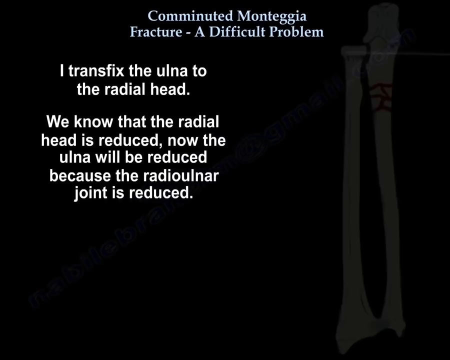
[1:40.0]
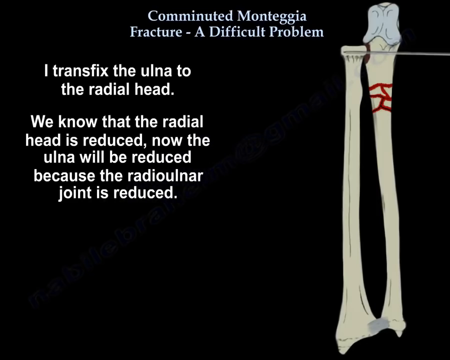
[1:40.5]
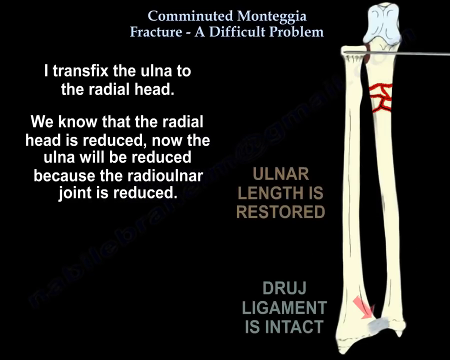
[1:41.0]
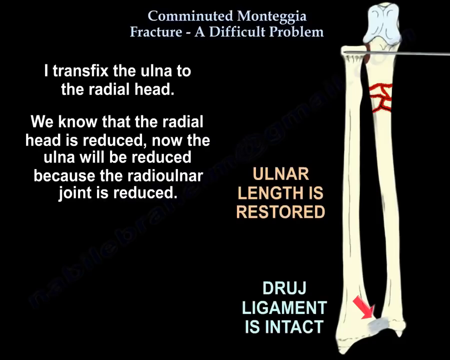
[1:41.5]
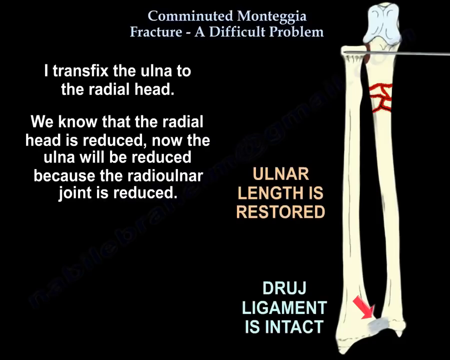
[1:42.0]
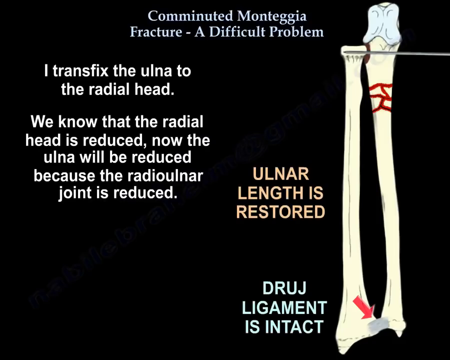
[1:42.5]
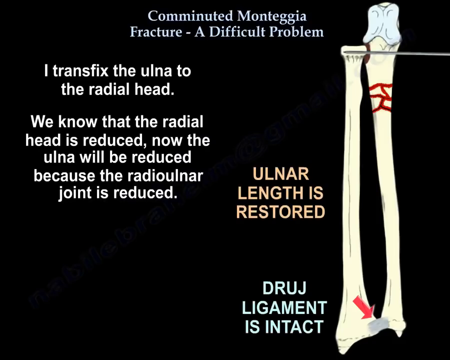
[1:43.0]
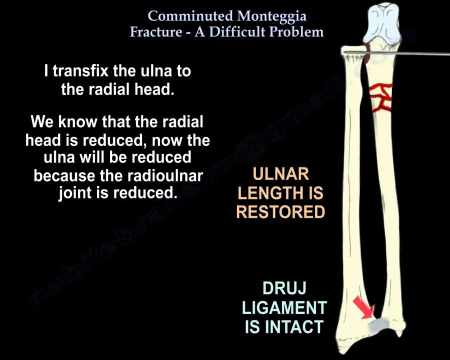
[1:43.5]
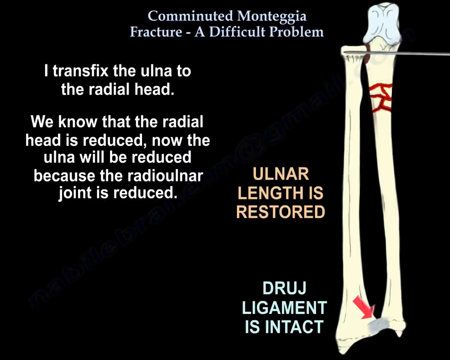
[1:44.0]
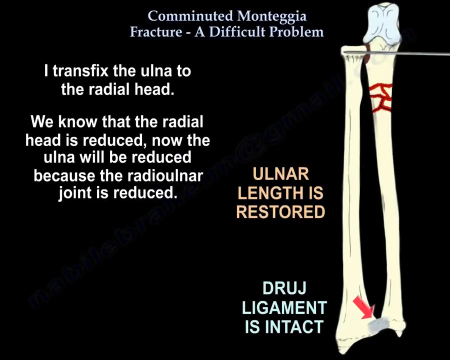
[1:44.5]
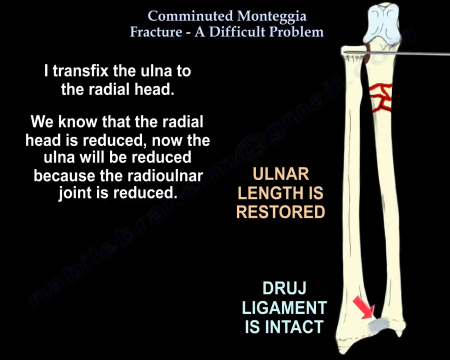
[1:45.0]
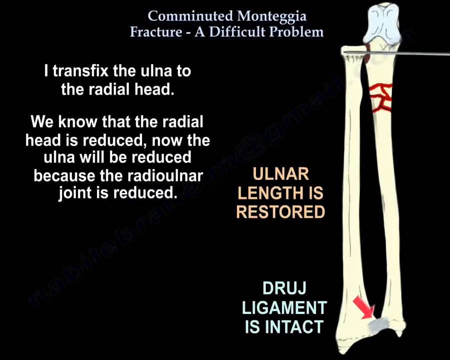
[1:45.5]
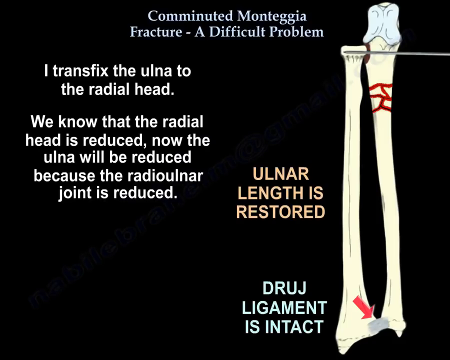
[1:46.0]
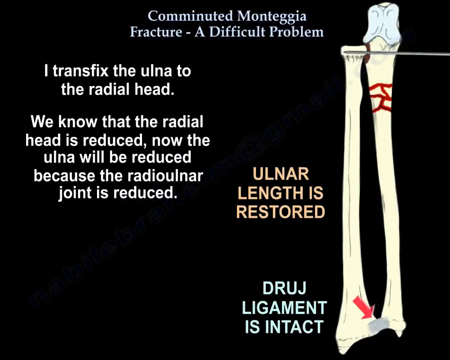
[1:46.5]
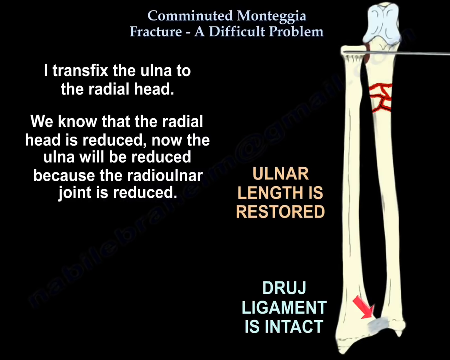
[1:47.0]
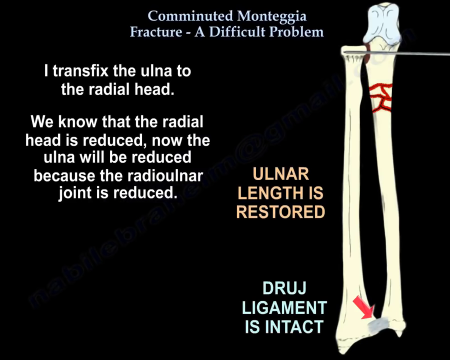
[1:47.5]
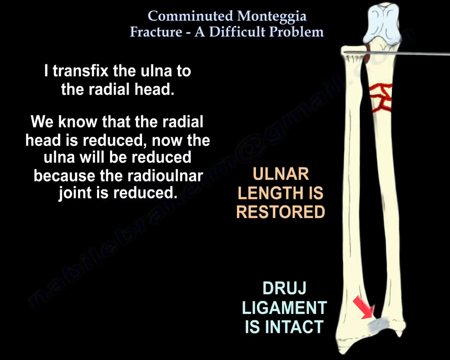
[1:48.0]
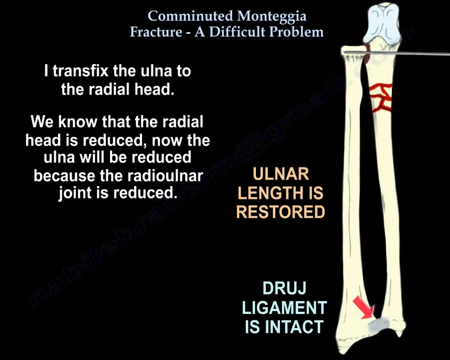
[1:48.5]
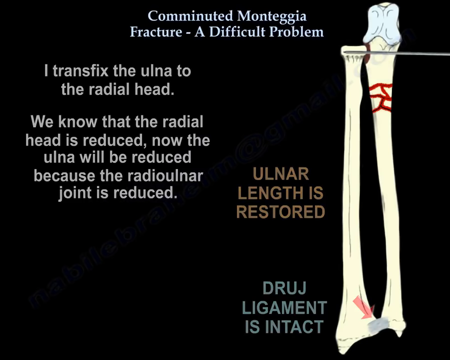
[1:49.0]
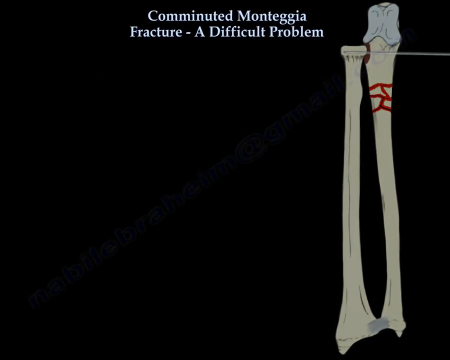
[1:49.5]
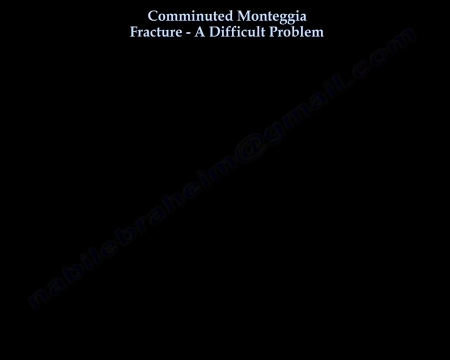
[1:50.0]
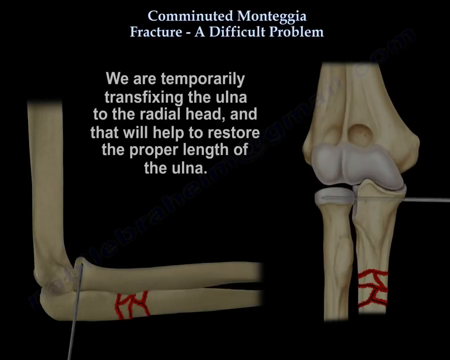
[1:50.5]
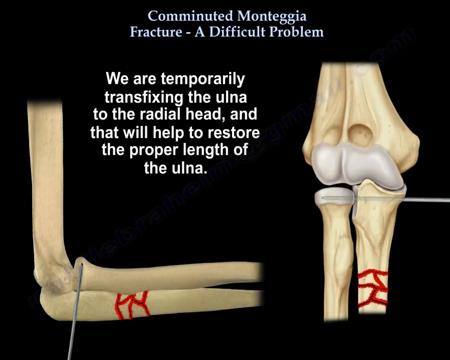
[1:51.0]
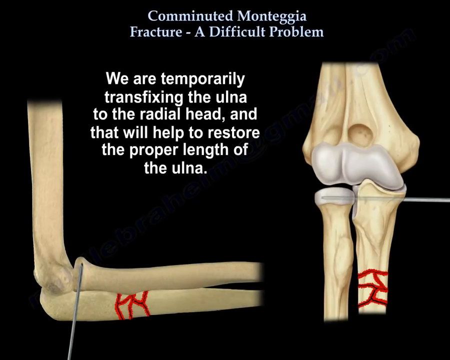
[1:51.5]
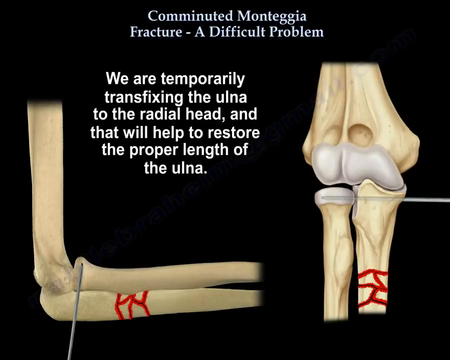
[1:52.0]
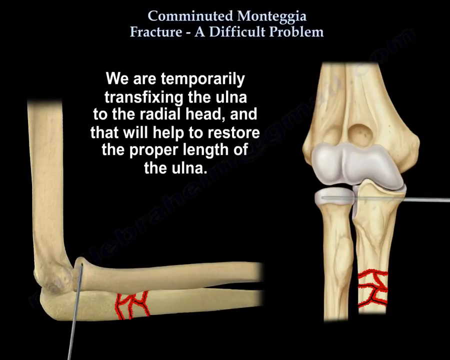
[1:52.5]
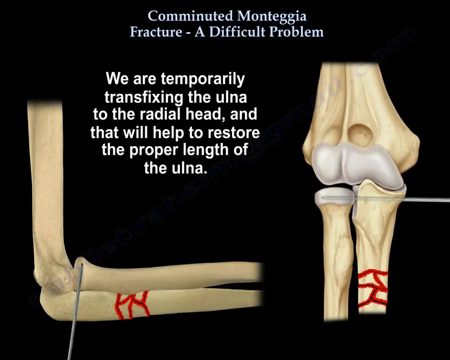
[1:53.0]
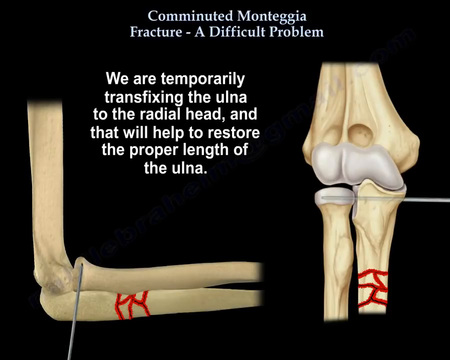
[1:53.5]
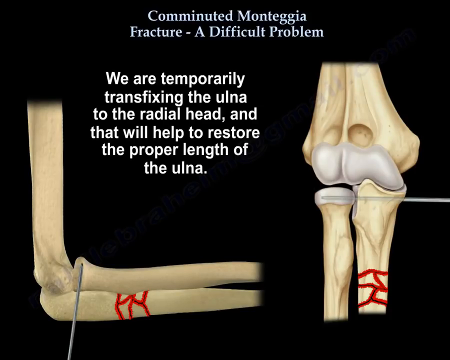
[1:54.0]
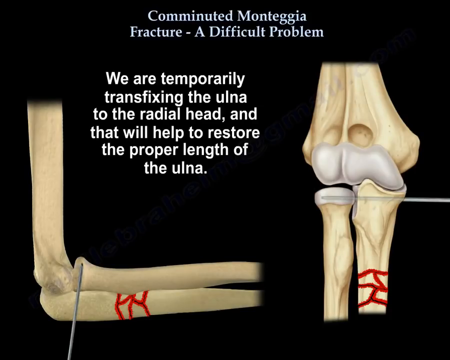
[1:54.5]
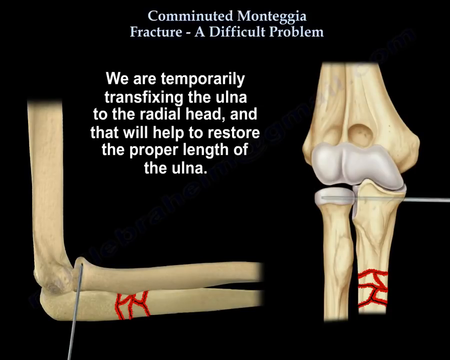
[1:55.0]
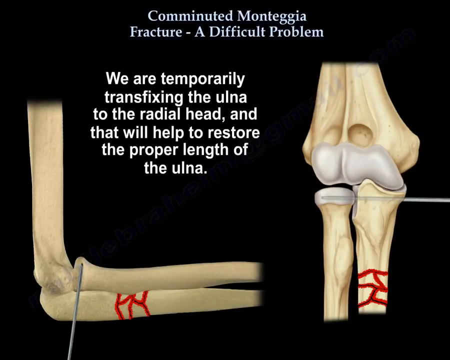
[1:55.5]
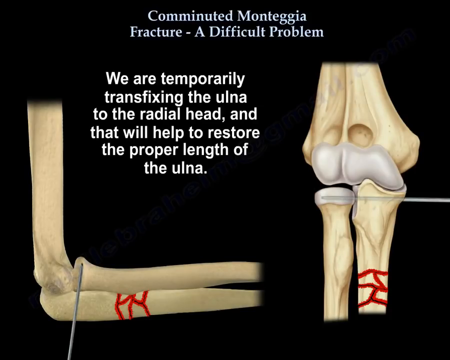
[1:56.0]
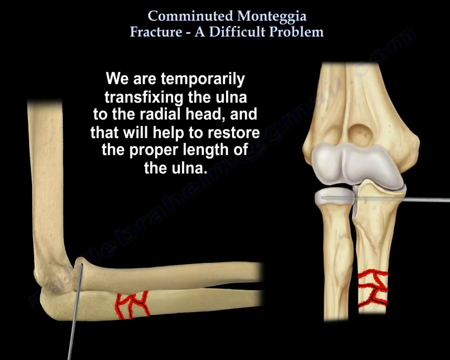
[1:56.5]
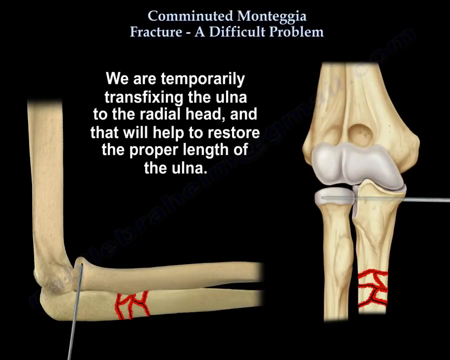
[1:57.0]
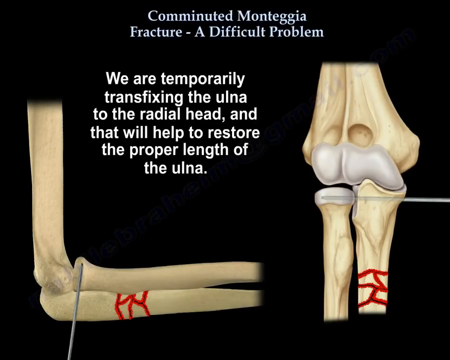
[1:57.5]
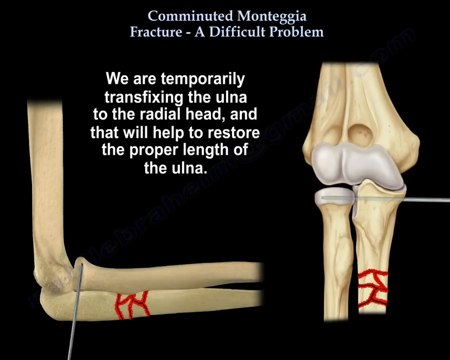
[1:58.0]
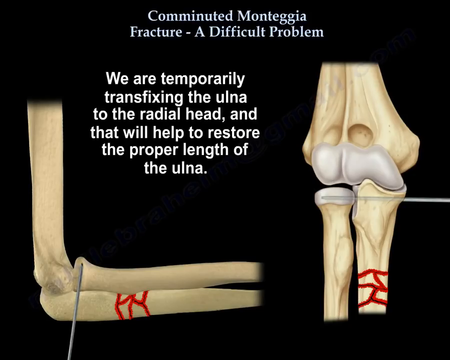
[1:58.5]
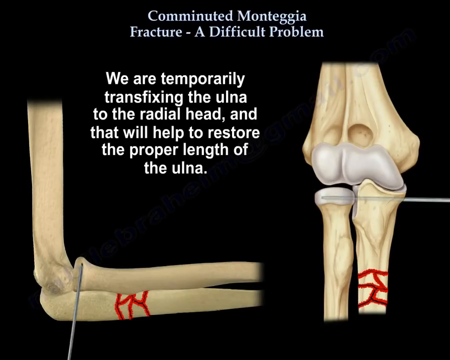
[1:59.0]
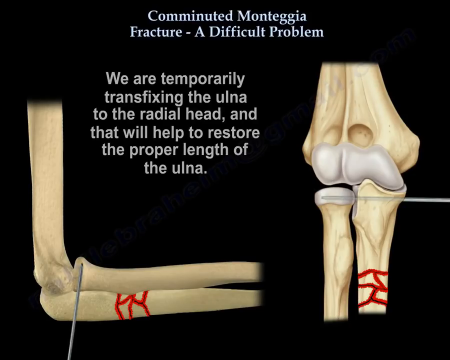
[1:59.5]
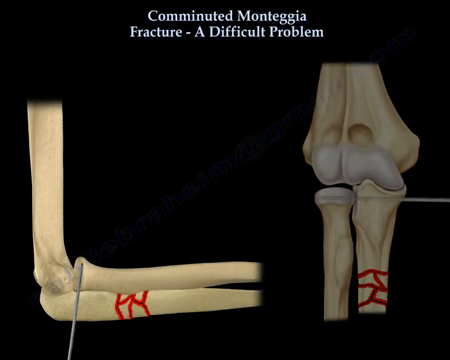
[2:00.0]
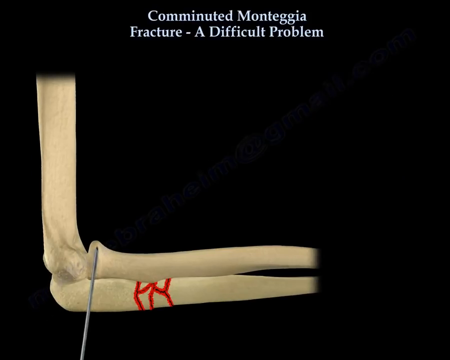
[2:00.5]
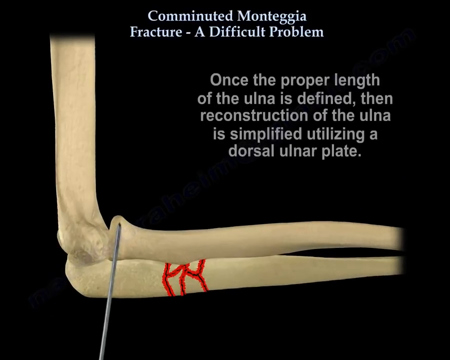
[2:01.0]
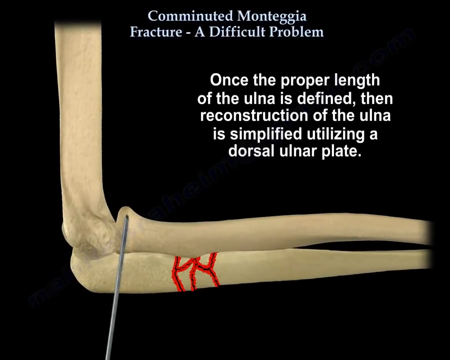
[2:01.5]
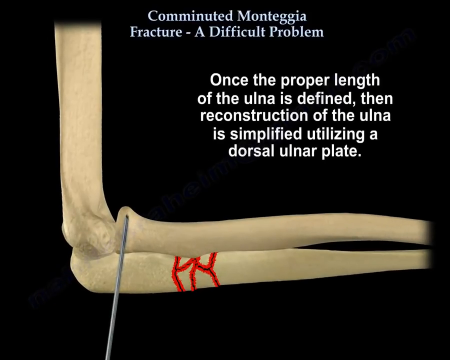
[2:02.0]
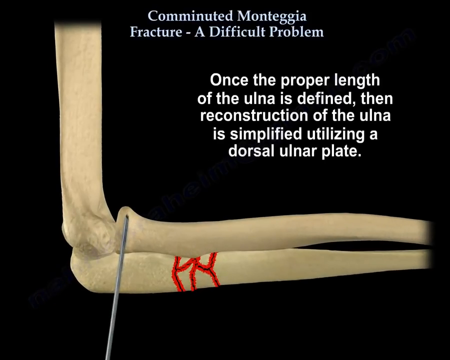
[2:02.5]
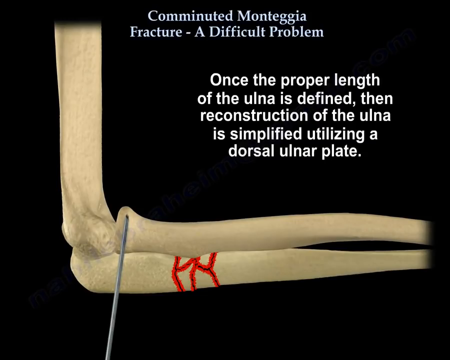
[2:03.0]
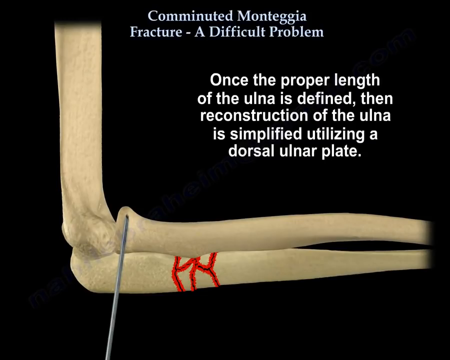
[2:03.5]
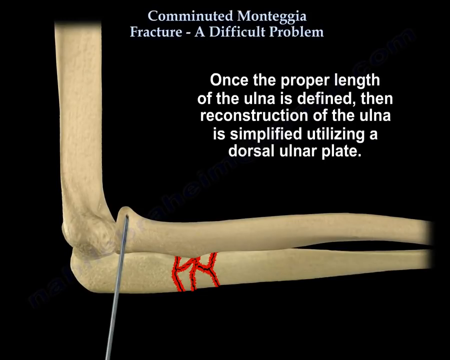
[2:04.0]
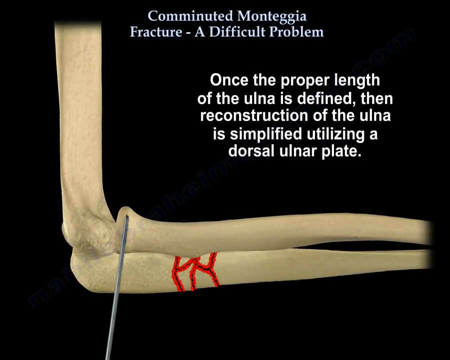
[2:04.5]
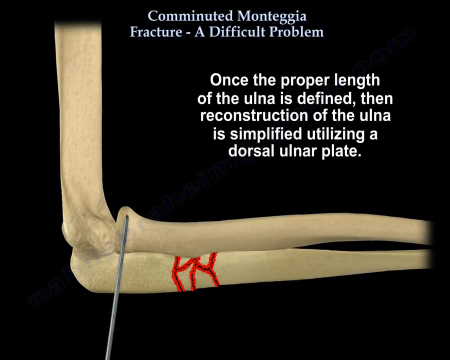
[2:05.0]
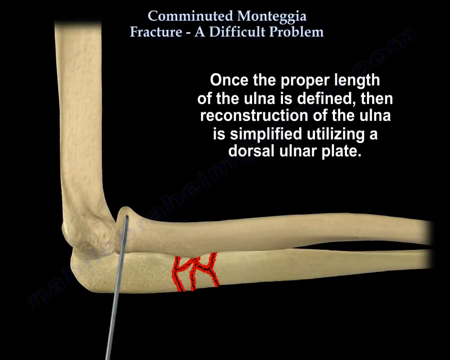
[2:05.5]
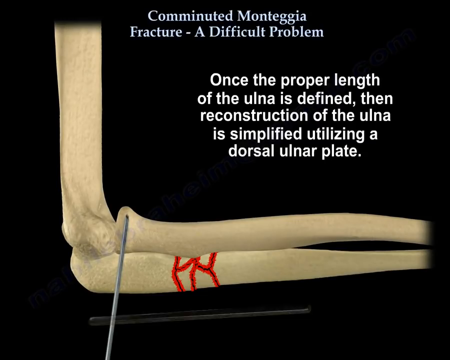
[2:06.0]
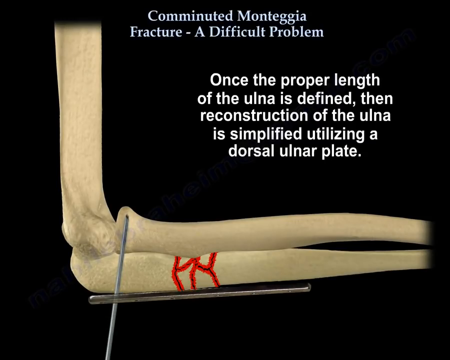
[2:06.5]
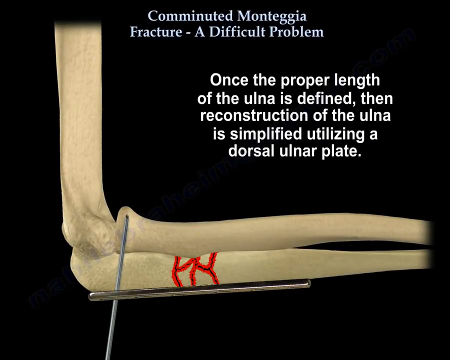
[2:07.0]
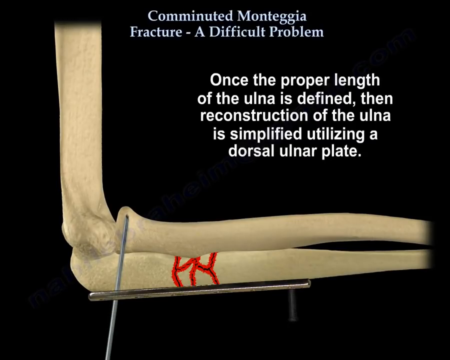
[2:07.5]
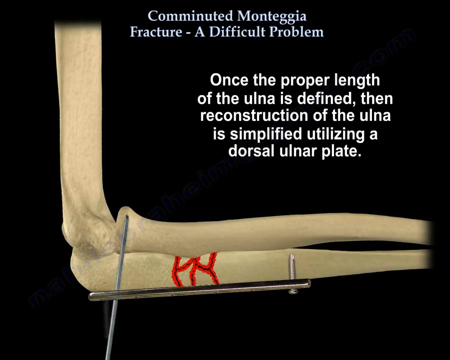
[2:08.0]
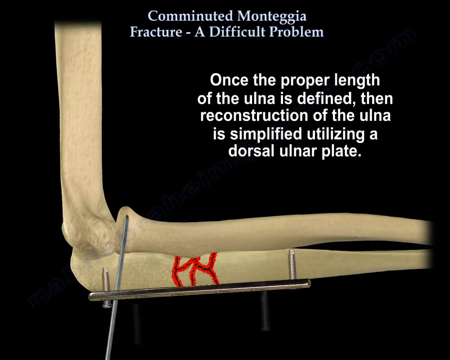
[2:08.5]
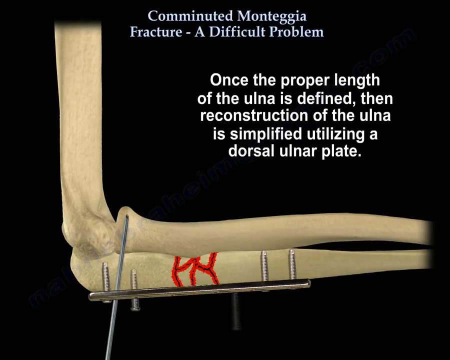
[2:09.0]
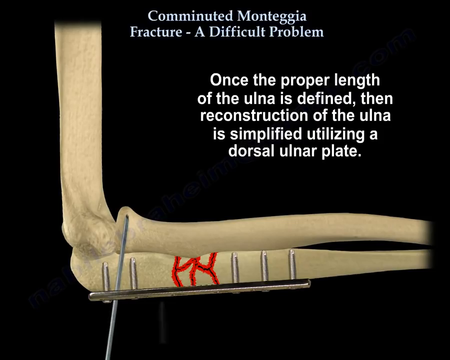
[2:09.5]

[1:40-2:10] The black background with the main heading at the top continues, but now the text below it is on the left of the screen. In white font it reads "I transfixed the ulna to the radial head." Below that: "we know that the radial head is reduced. Now, the ulna will be reduced because the radio ulna joint is reduced." On the right-hand side of the screen is a graphic running from the top of the screen to the bottom, from a kind of elbow joint, with that bone in a whiter shade. The right-hand bone has a red fragmented break towards its top. On the left-hand bone, an arrow at the bottom points diagonally from the left bone down into the joint. To the left of that is the text "First, ulna length is restored." and below it "DRUJ ligament is intact."